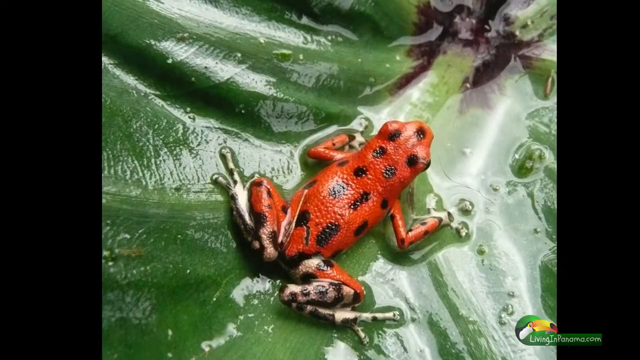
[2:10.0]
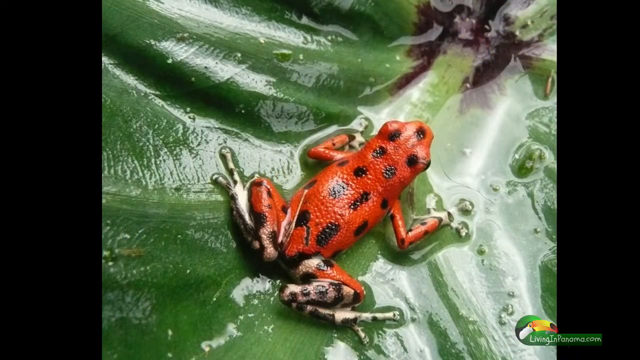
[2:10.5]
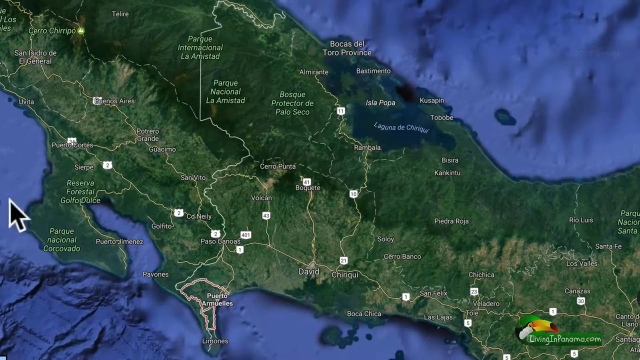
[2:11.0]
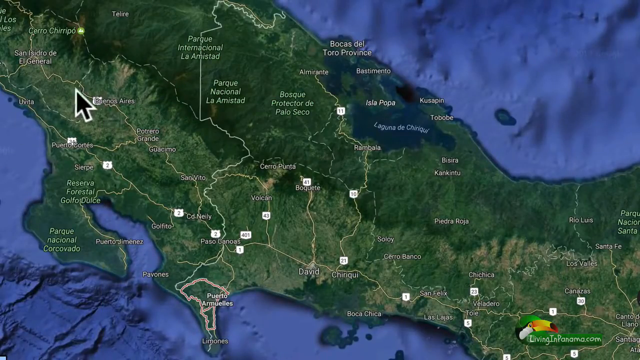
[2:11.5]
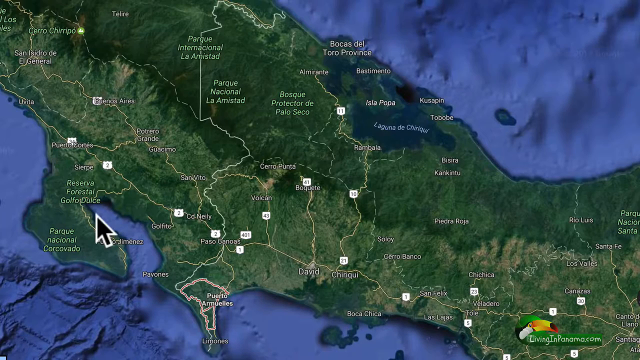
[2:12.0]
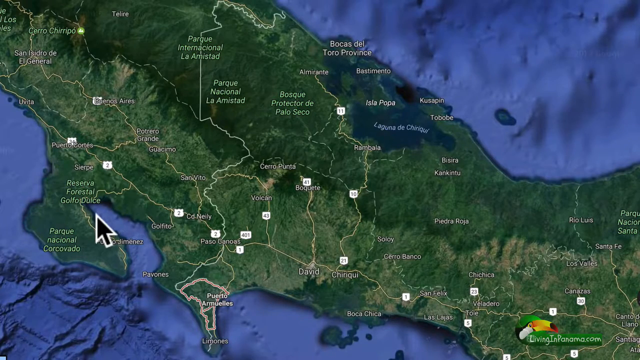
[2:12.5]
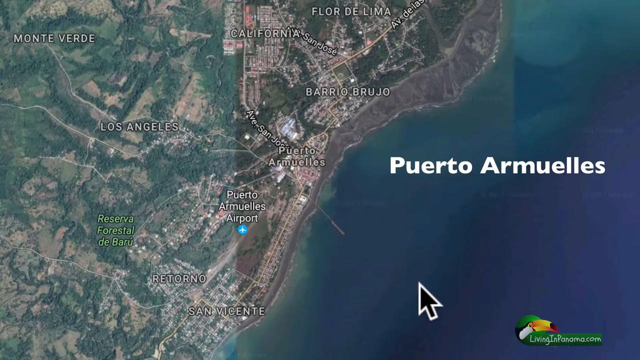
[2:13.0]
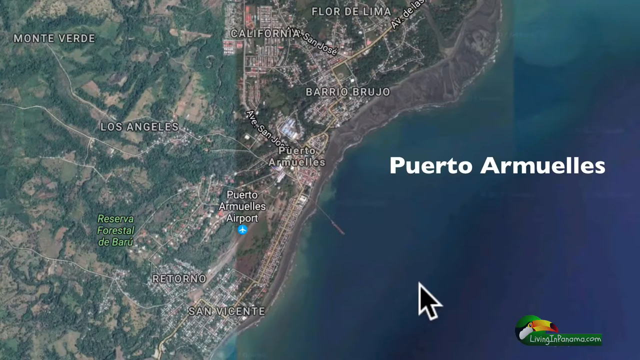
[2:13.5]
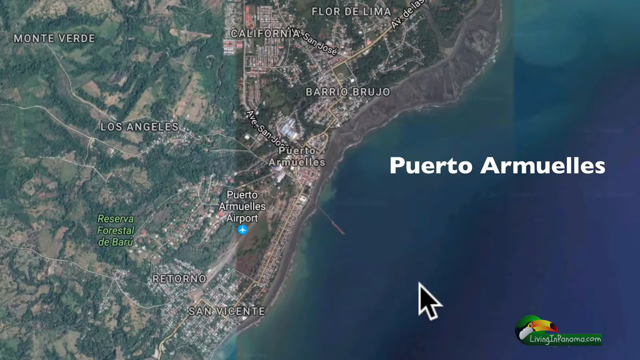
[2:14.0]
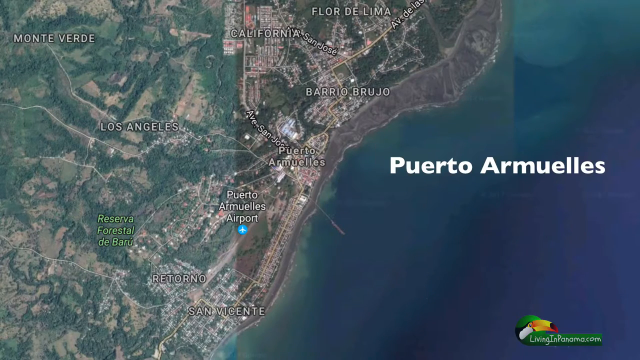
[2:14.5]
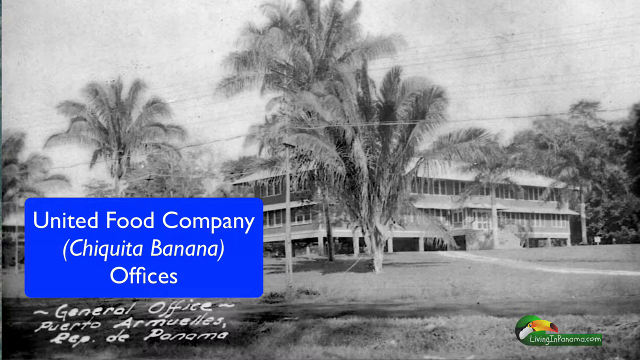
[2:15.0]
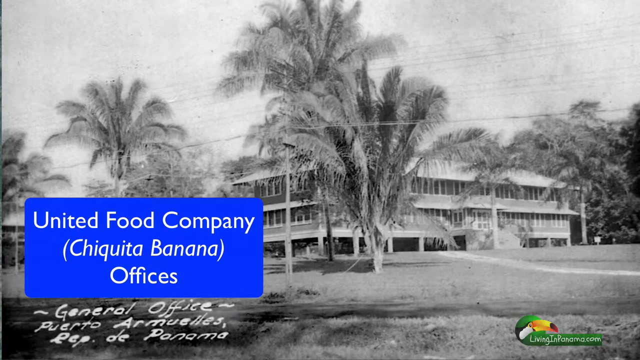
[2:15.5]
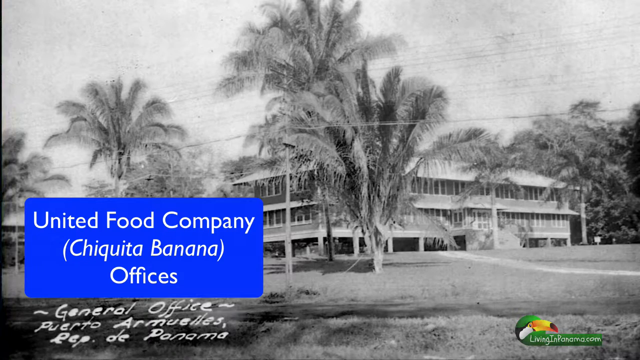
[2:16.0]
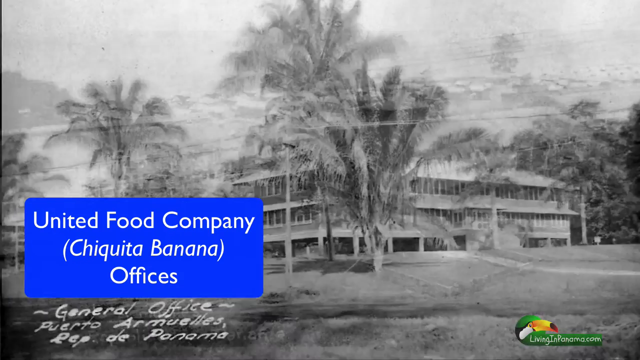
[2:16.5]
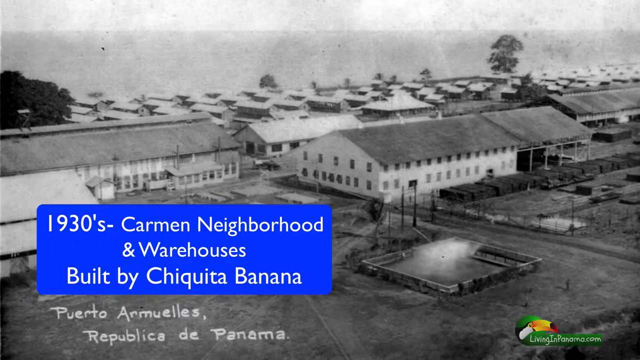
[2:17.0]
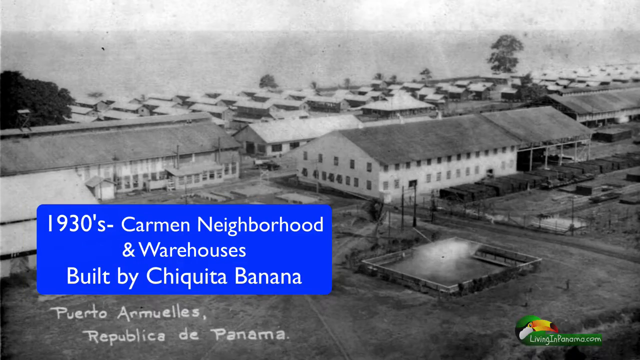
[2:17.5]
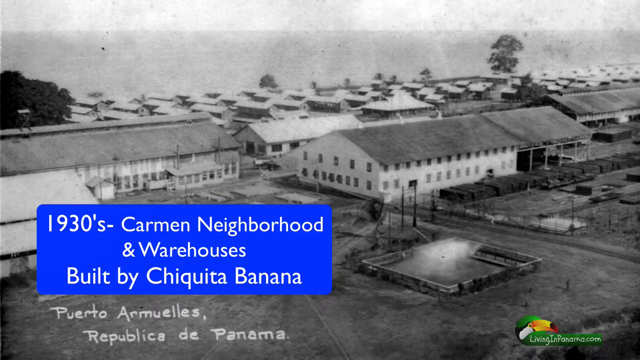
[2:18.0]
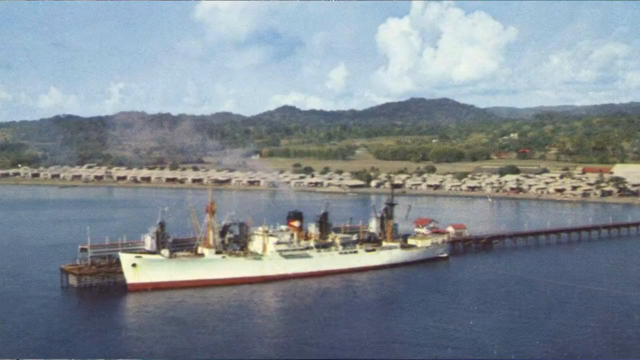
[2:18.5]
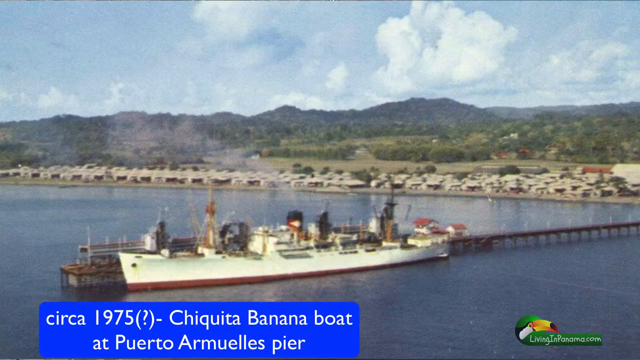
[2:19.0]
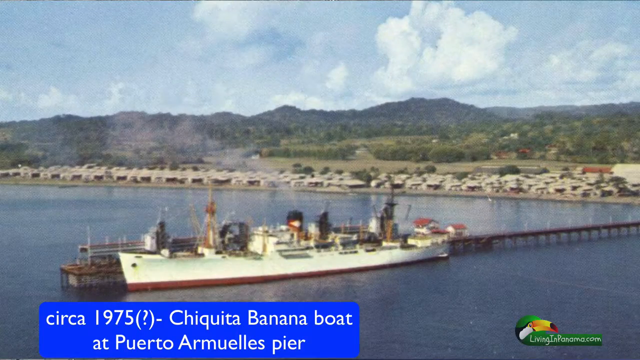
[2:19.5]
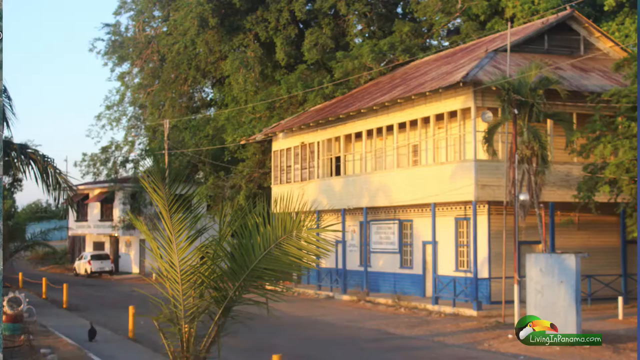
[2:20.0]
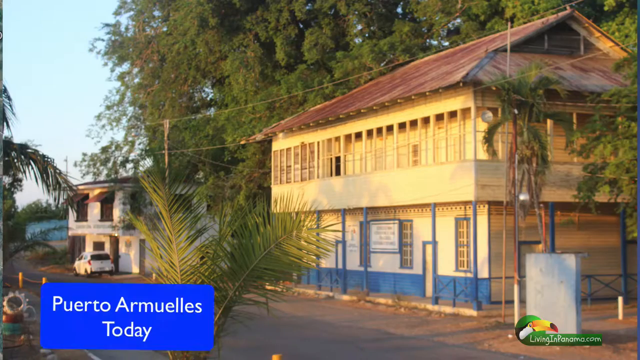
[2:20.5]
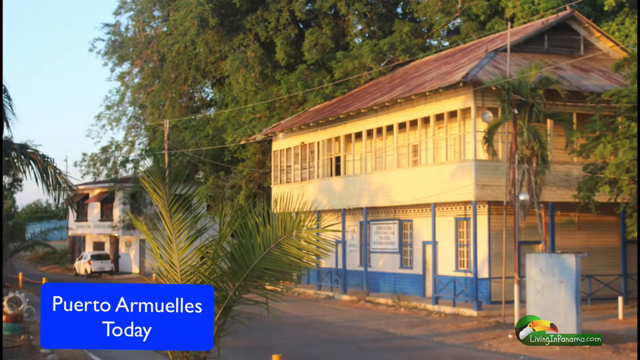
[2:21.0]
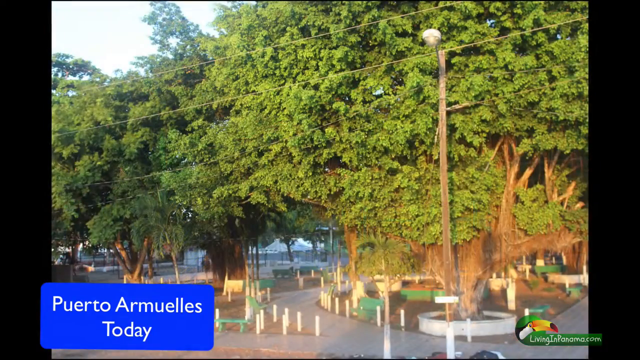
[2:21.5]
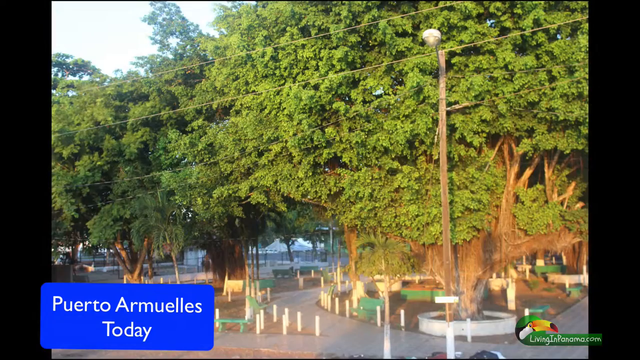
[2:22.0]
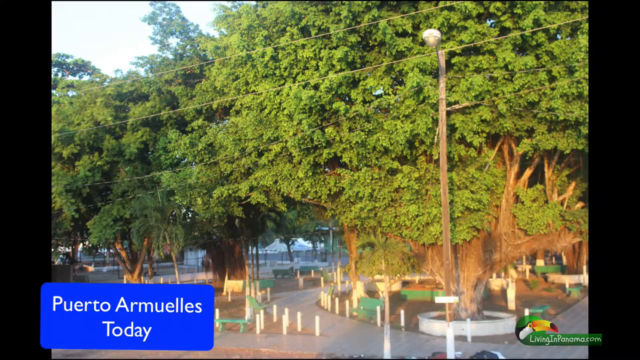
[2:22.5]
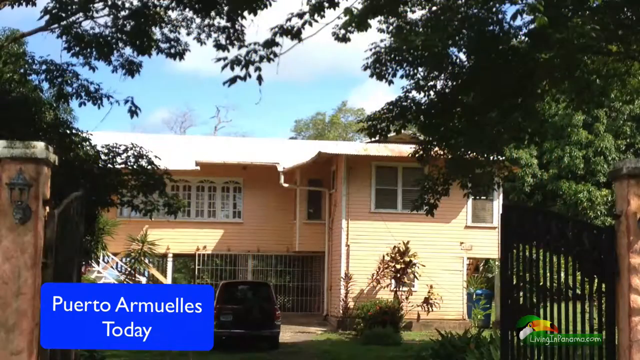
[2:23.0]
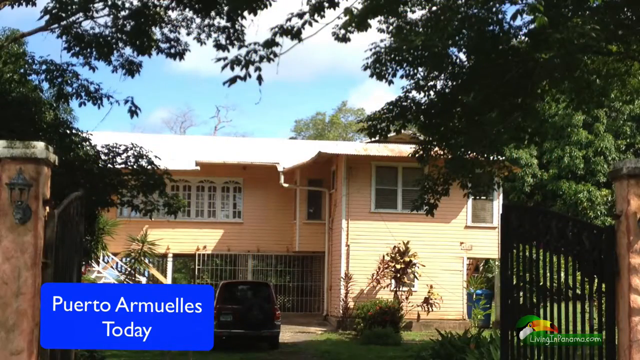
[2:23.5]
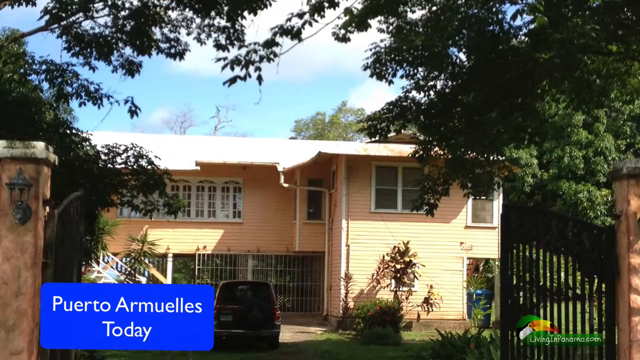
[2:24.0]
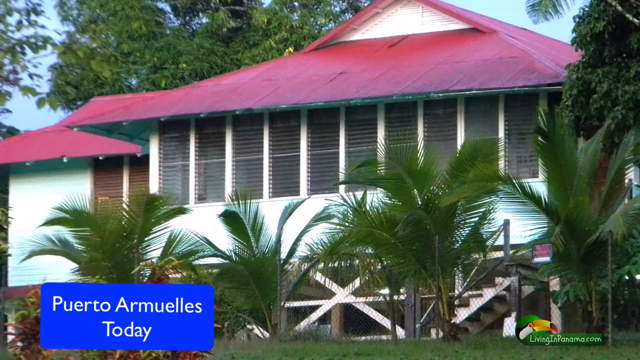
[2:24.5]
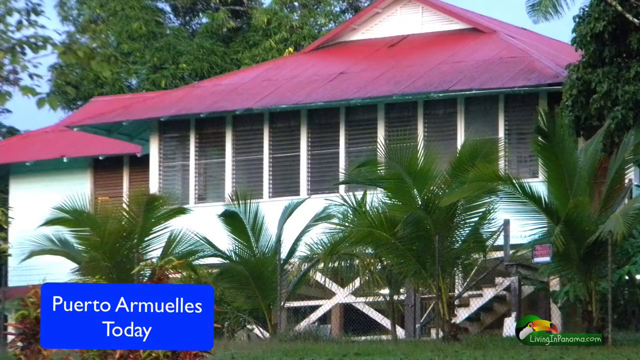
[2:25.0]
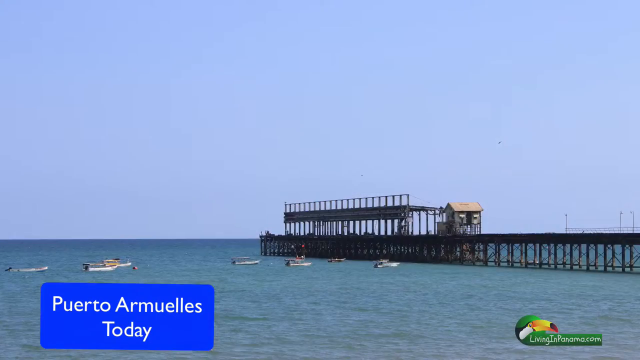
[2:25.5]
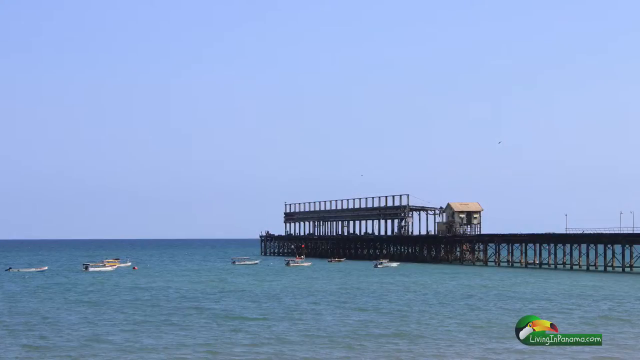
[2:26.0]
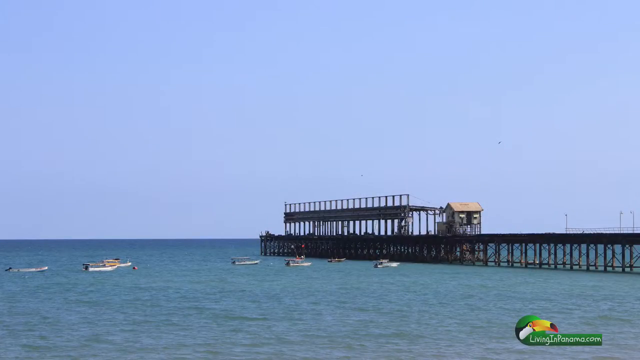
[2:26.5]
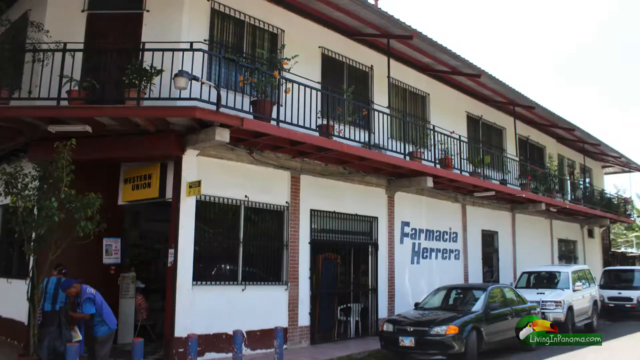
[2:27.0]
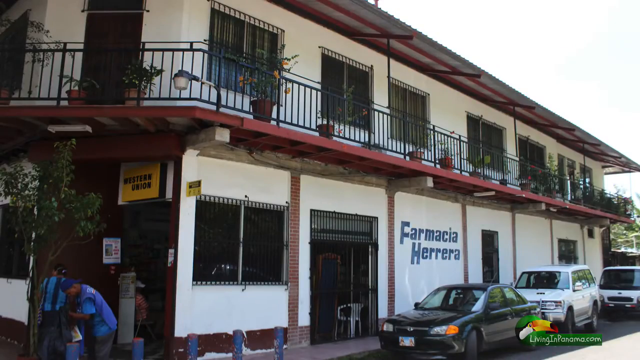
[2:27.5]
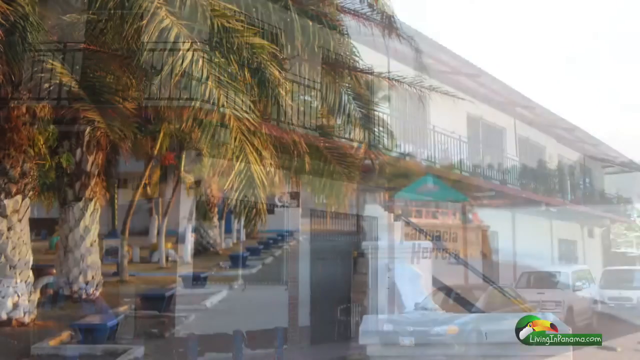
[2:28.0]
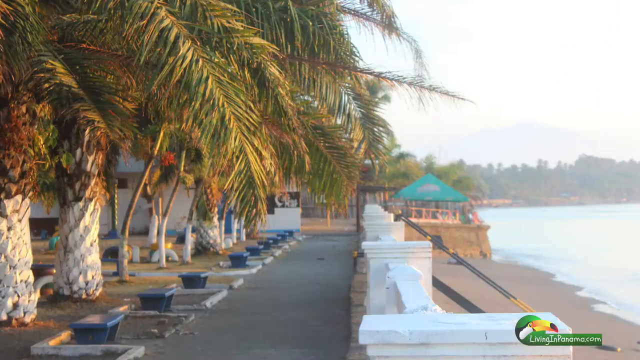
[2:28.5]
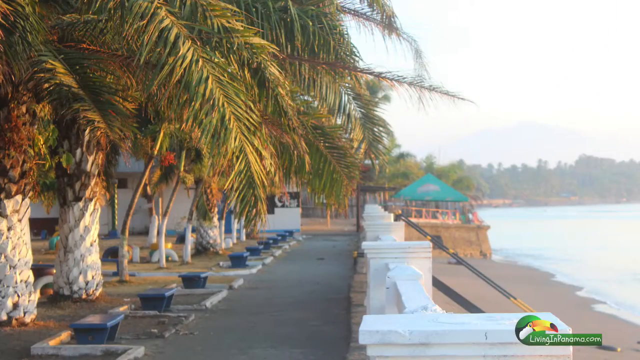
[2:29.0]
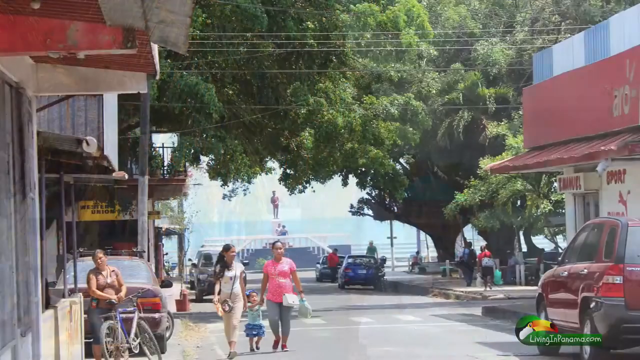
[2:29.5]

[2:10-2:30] A large, wet green leaf appears with an orange frog on top of it that has black spots and dashes all over its back. The video cuts to a map of Panama with the arrow circling an area on the left-hand side of the country, then to a closer map of a town area with the words "Proto-Armules" written next to it. A black and white photo follows which says "United Food Company Chiquita Banana Offices"; the building in it is two or three stories high with large palm trees in front of and around it. Images of some warehouse buildings near the beach follow, with the text "1930s Carmen Neighbourhood" and "warehouses built by Chiquita Banana". An image on the seafront shows a large boat at the end of a pier, and more images of a town follow, including trees, buildings and the words "Puerto Armellies" on the screen.